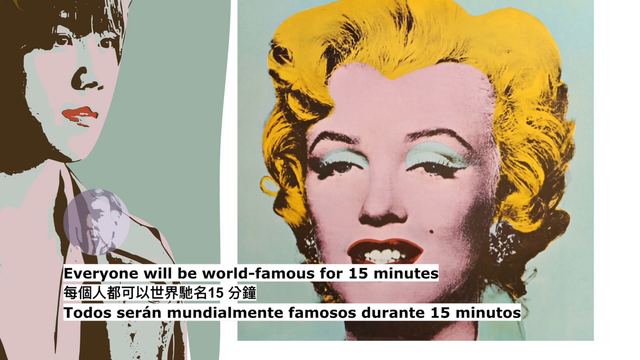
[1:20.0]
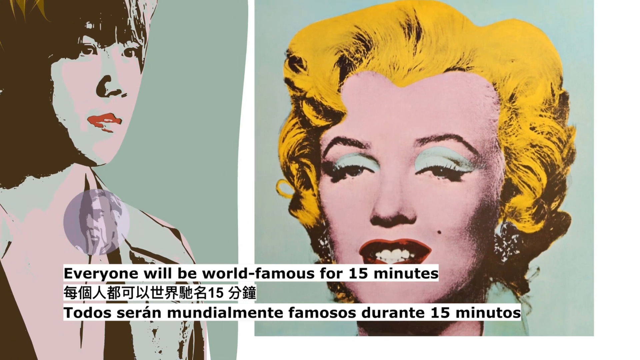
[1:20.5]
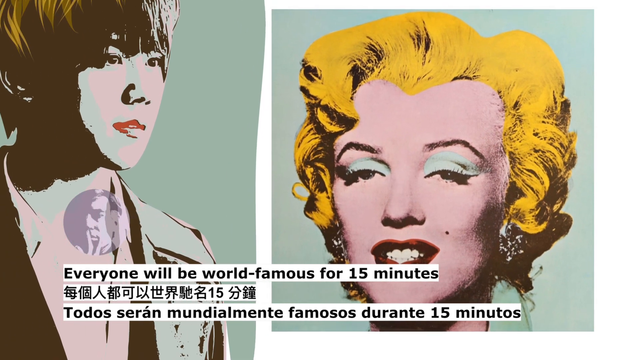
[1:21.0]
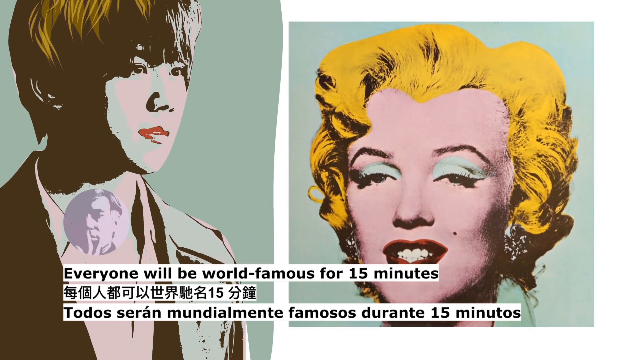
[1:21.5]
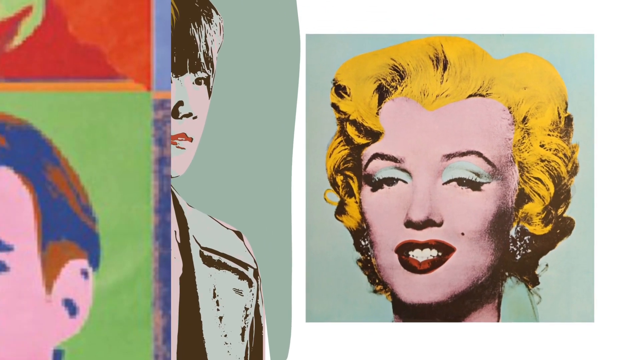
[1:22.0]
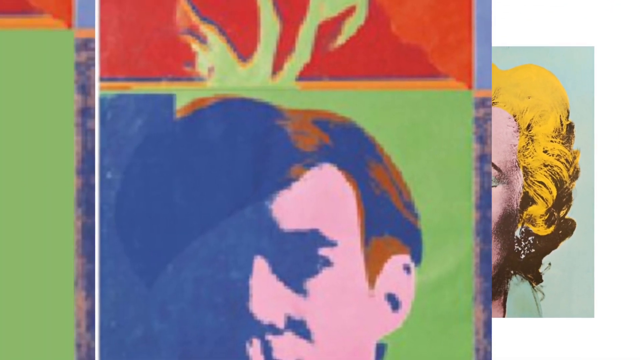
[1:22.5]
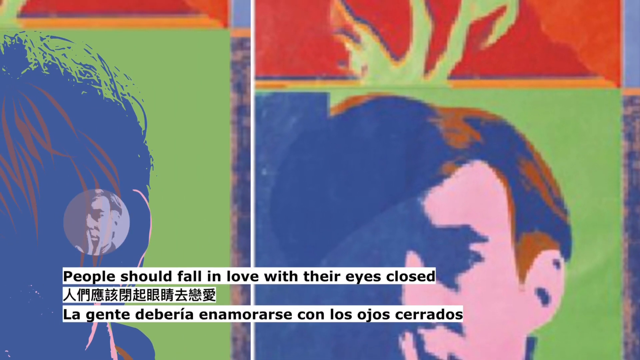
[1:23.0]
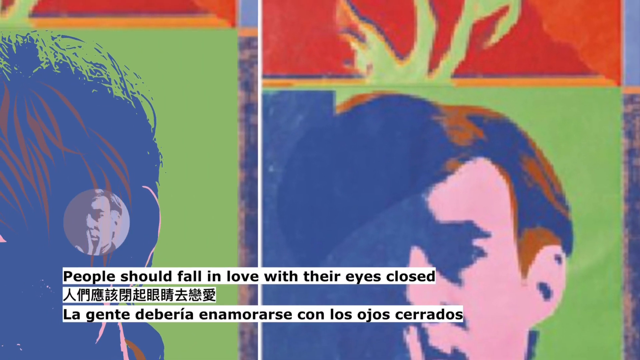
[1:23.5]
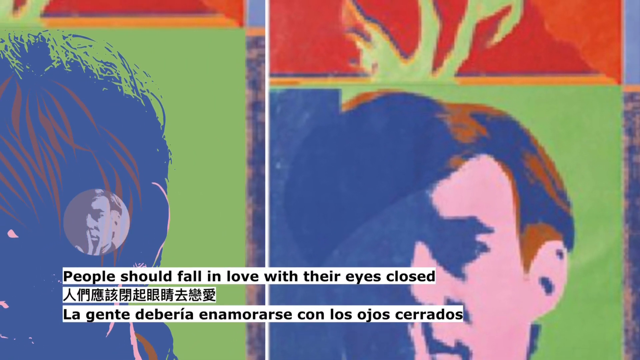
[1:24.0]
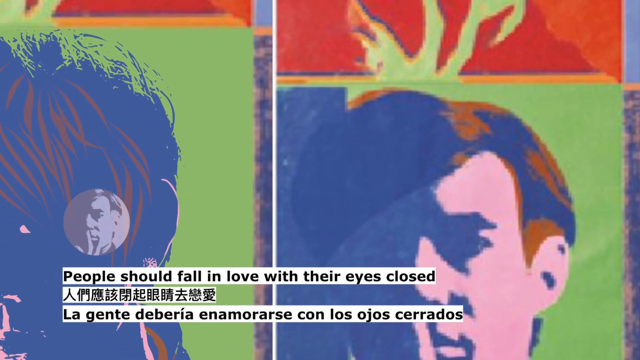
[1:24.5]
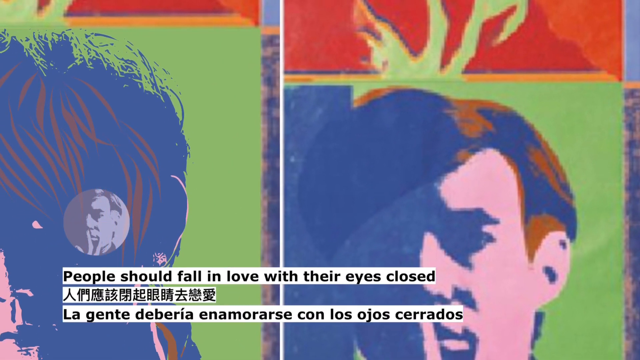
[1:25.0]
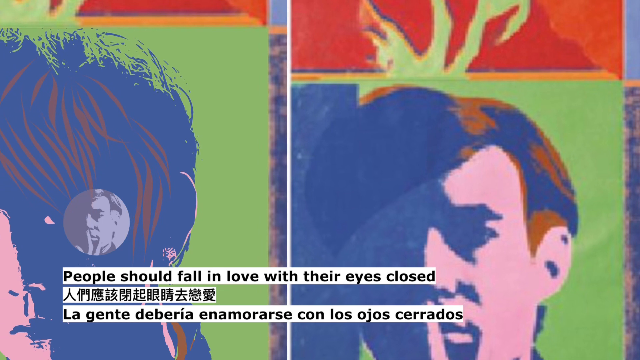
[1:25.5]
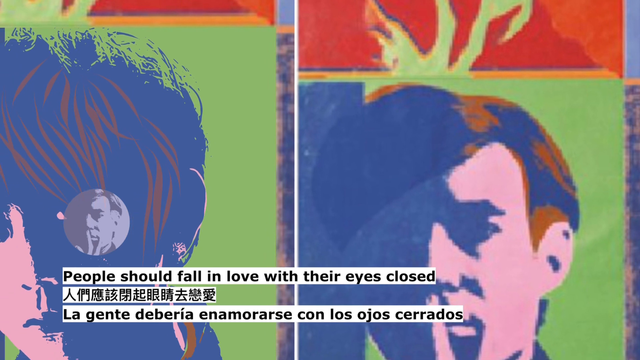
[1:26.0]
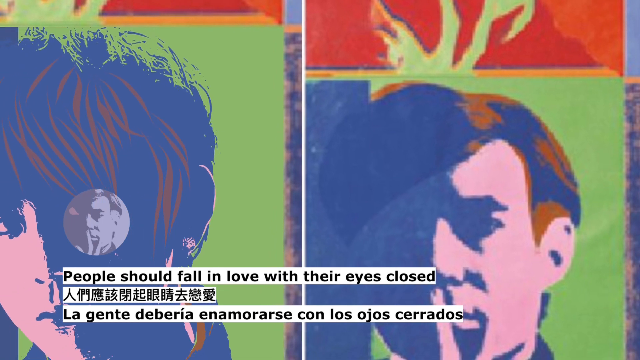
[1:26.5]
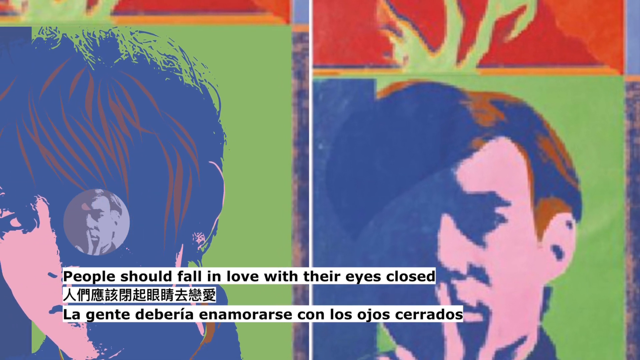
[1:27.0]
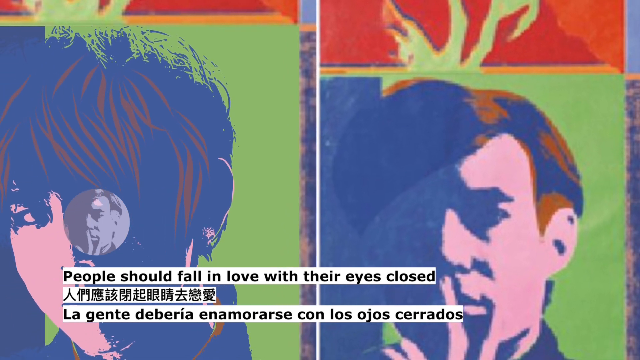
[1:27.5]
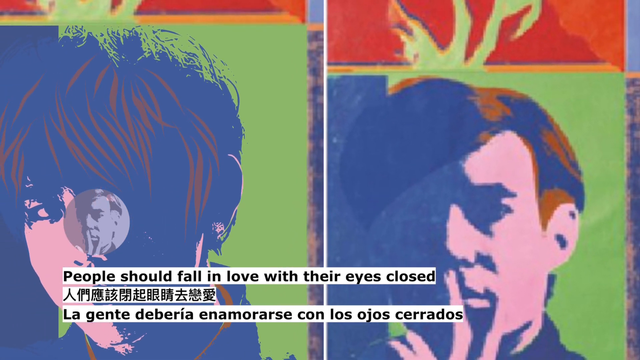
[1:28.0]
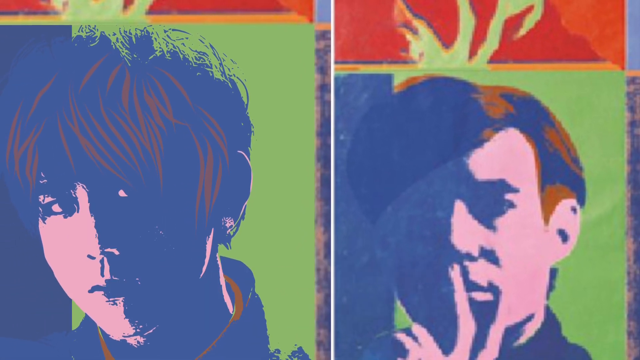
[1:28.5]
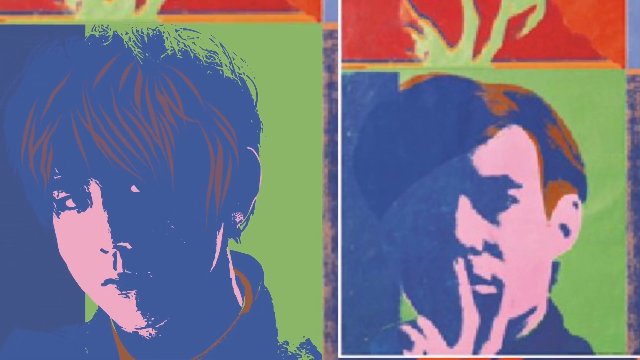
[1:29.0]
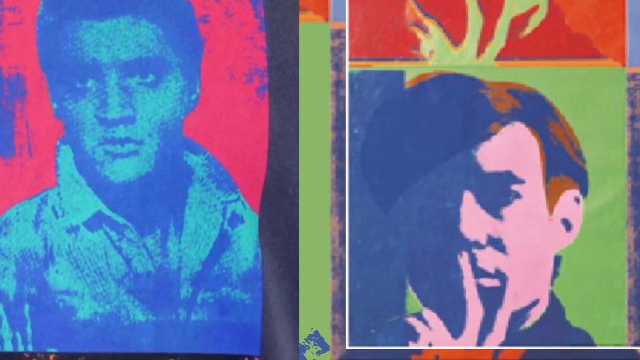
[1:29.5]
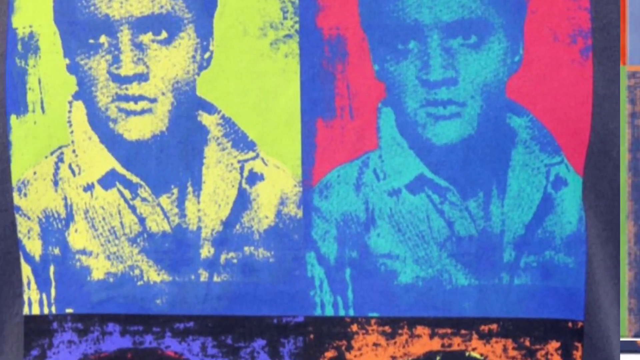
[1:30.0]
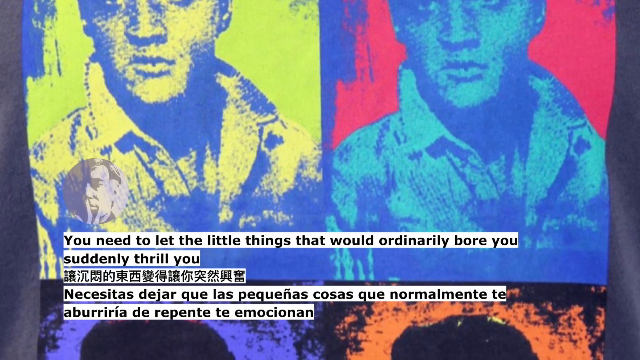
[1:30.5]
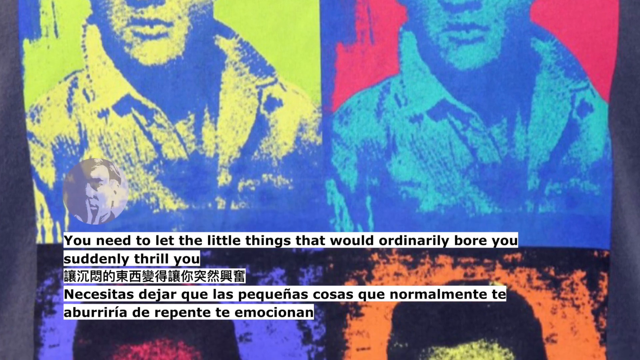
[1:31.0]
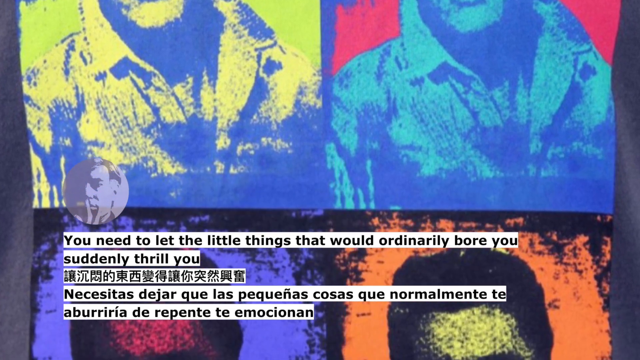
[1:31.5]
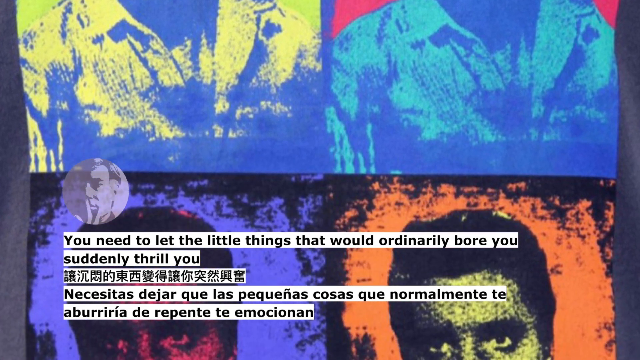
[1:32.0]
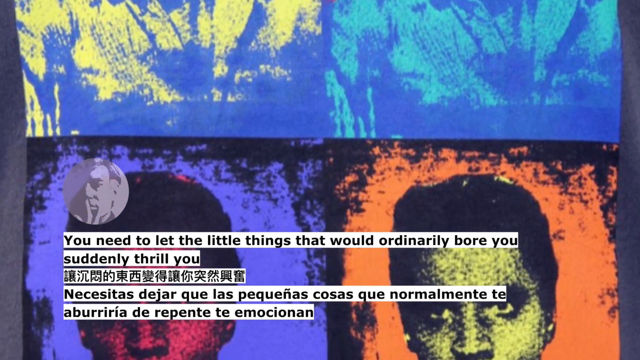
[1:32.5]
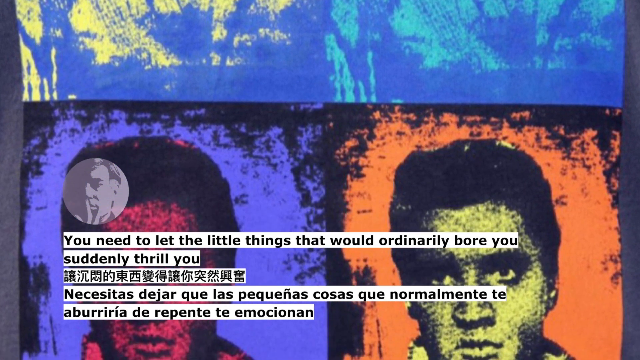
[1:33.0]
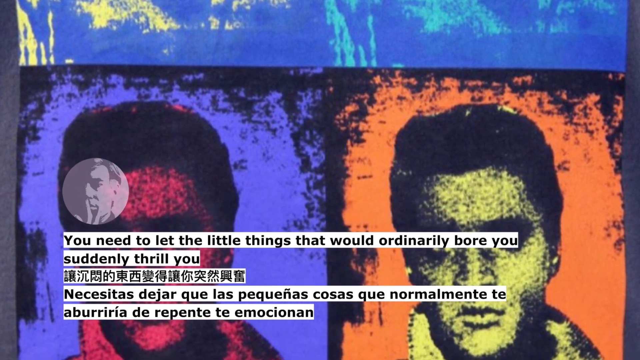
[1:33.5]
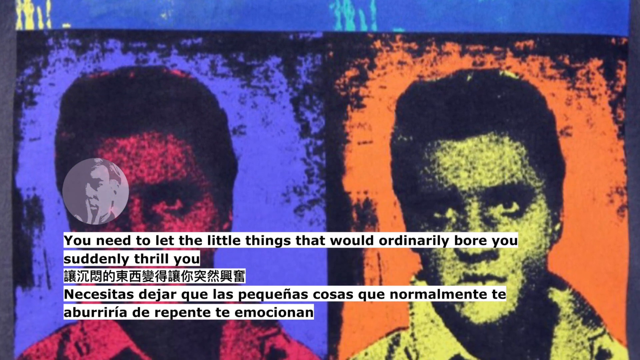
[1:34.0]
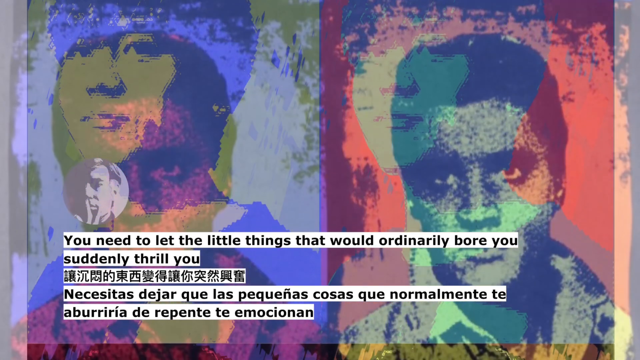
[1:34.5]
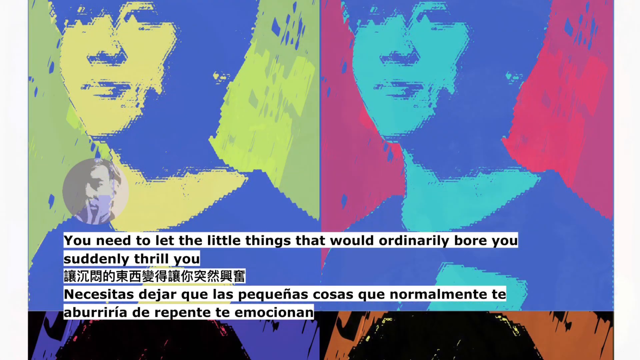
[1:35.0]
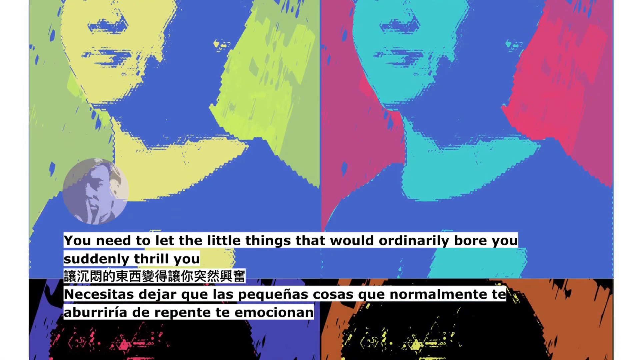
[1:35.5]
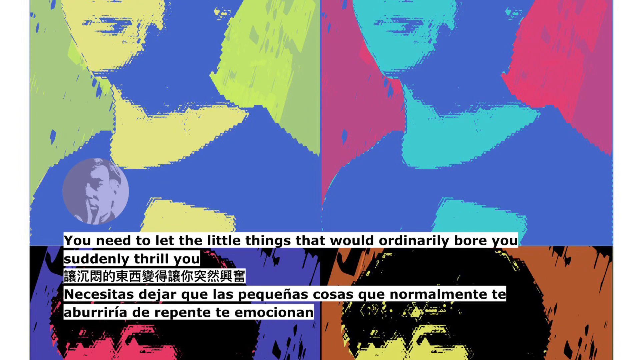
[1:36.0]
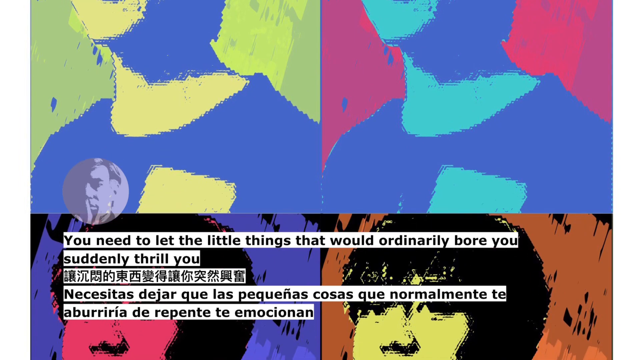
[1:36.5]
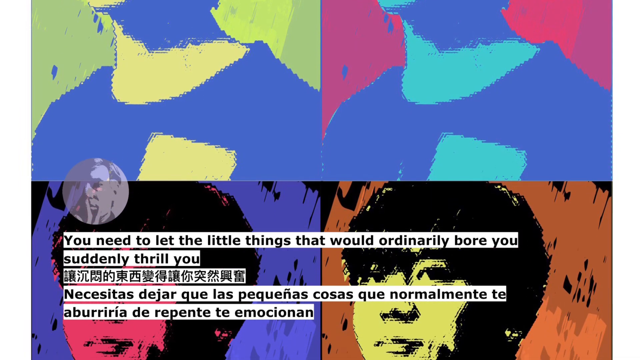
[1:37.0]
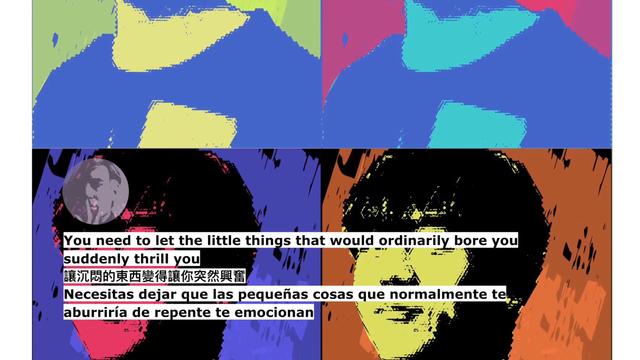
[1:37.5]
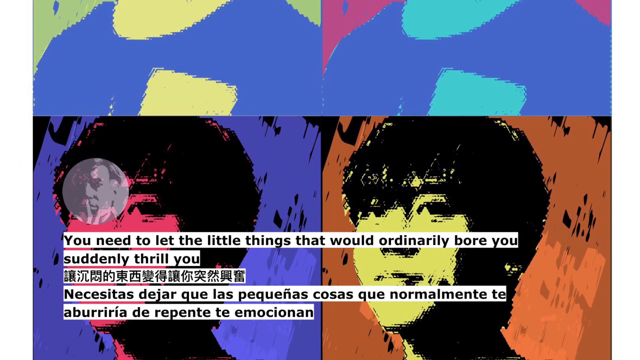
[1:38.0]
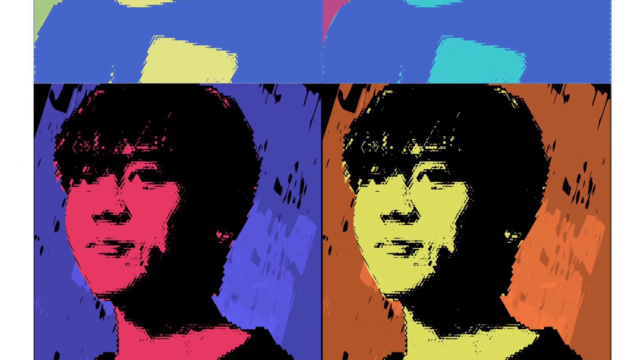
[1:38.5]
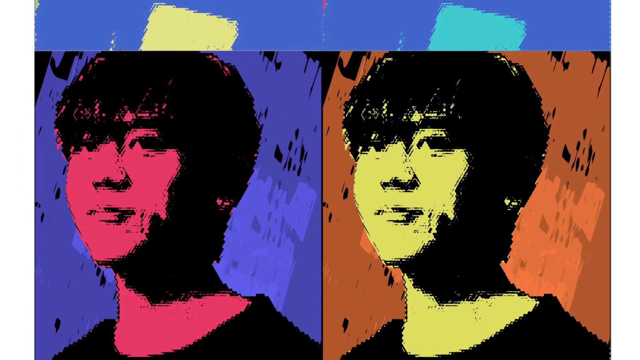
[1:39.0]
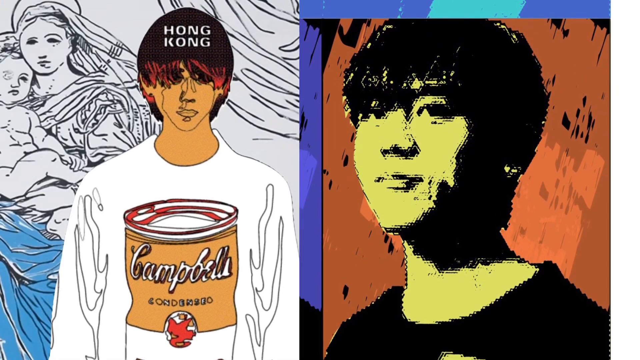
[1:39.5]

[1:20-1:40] An image shows the artist's drawing of Marilyn Monroe on the right, with a teal green background, yellow hair, a pink face, roughly powder blue eyeliner, black eyelids, red lips, white teeth and silver earrings. Black lettering underneath on a white background reads "everyone will be world famous for 15 minutes". The Asian artist is on the left side with orange, yellow and black hair, red lips, a black outline for the face, a white face and a black outline for the clothes, and a light purple outline of the artist in a circle is just around the neck area. The image shifts across, and black lettering underneath reads "people should fall in love with their eyes closed" on a white background, with the same wording in two different languages underneath. The camera pans back to show the same Asian artist with an orange outline, green and powder green on the right side and blue on the left, and the Andy Warhol image to the right side with orange hair, black, white on the right side around the ears and nose, darker blue to the left, and powder green behind. The image slides across again to what looks like a picture of Elvis with a blue outline of his face and body on a red background; the next image across on the left is yellow with a black outline. Black lettering underneath on a white background reads "you need to let the little things that you would ordinarily bore you suddenly thrill you", with two different languages below, and a light purple outline of the artist is in a circle on the left. The same two stock photos of Elvis are just below: an orange and yellow face and body on a blue background on the right, and reddish coloring on the left. The Asian artist appears again: a red background with a powder blue face on the right, a light green and yellow face with a black shirt on the left, and underneath that an orange and yellow face with black hair on the right and a darker purple and pink face with black hair on the left.